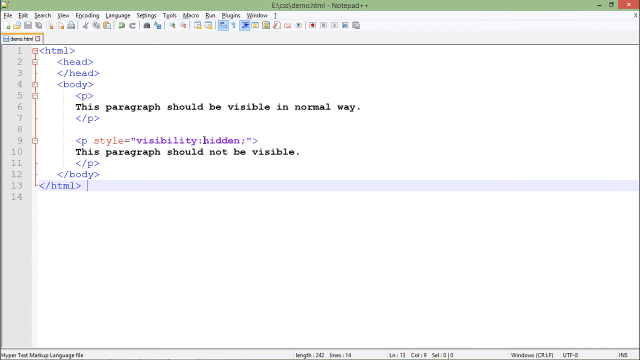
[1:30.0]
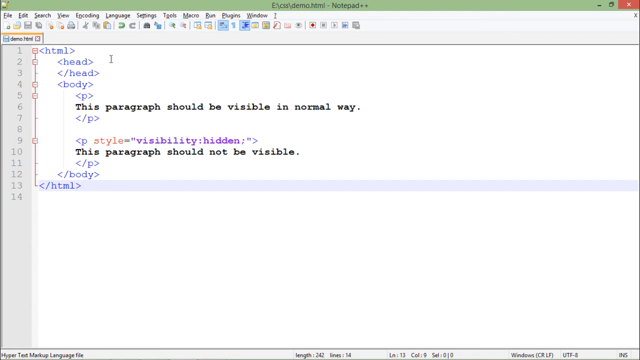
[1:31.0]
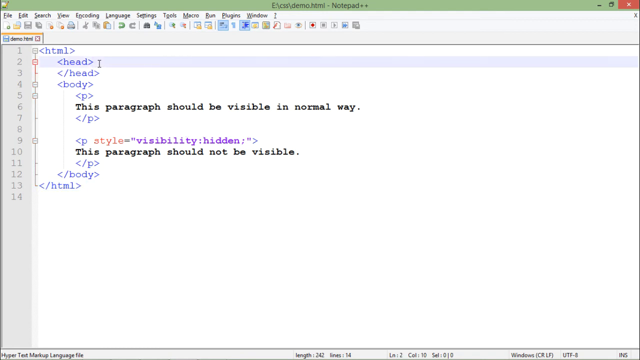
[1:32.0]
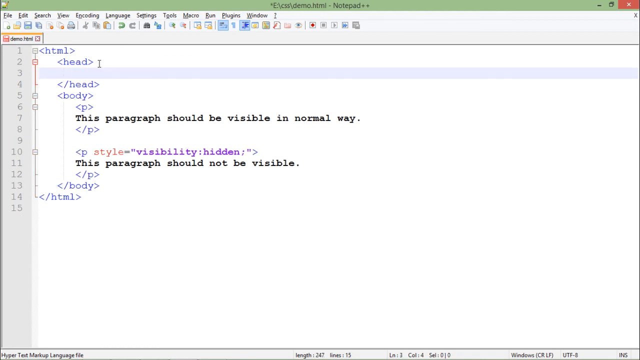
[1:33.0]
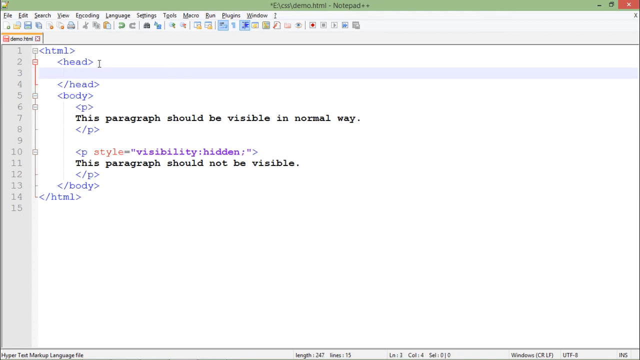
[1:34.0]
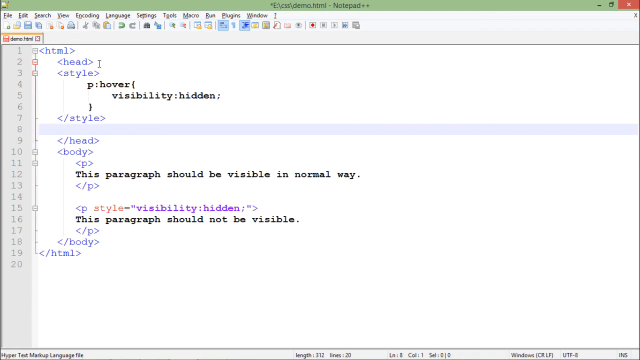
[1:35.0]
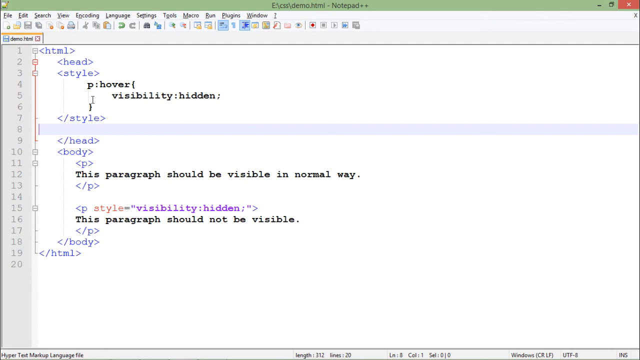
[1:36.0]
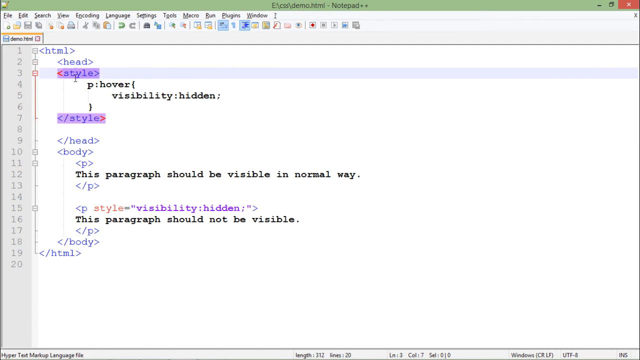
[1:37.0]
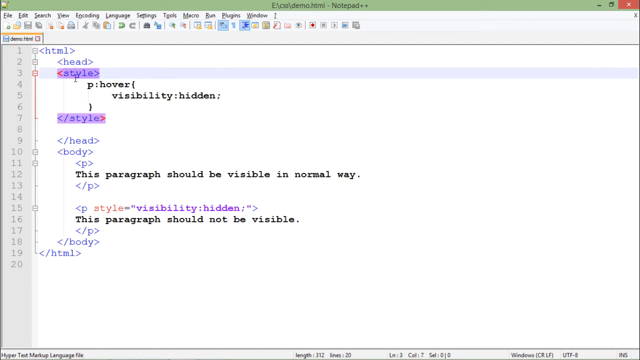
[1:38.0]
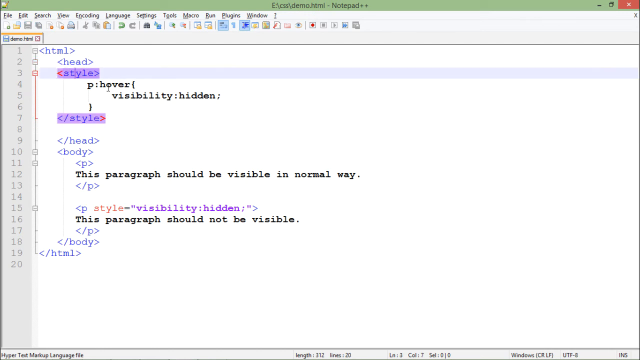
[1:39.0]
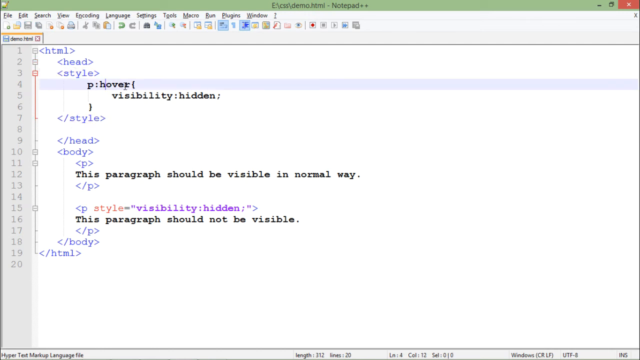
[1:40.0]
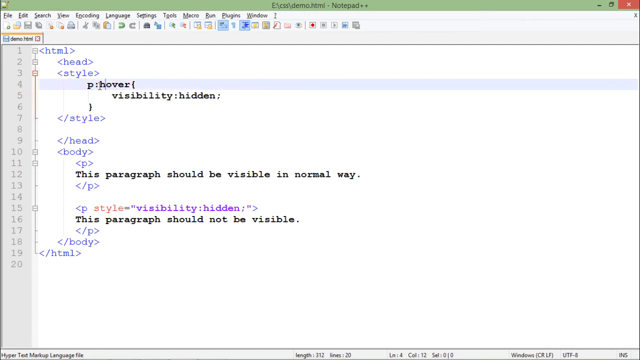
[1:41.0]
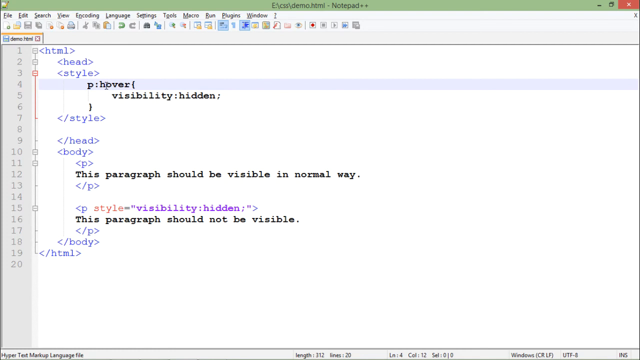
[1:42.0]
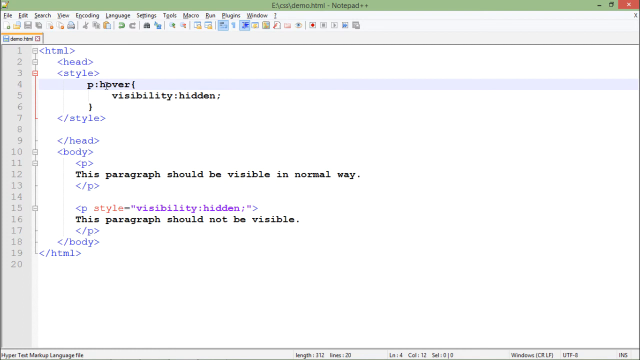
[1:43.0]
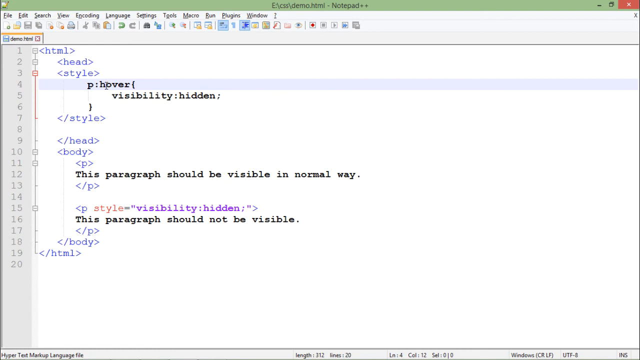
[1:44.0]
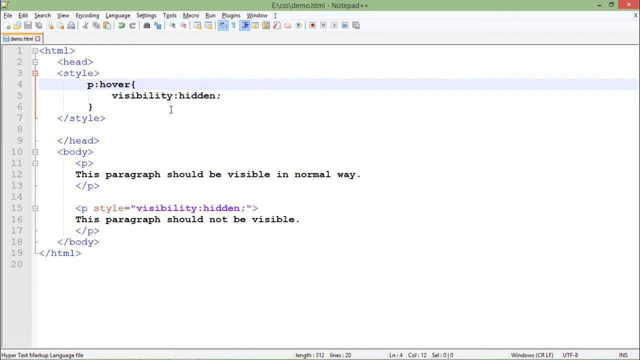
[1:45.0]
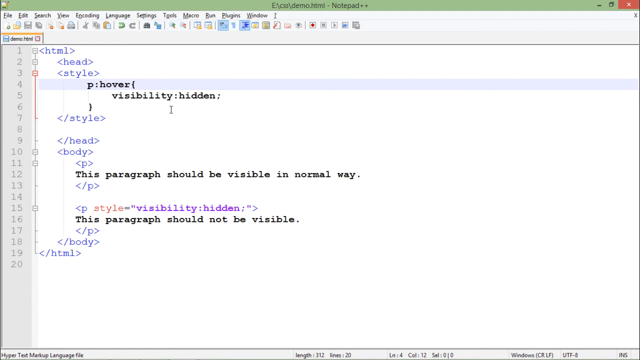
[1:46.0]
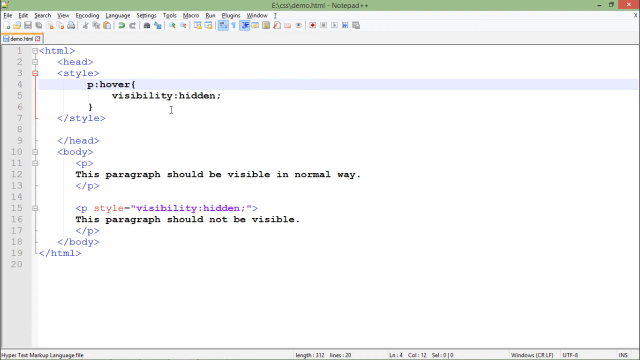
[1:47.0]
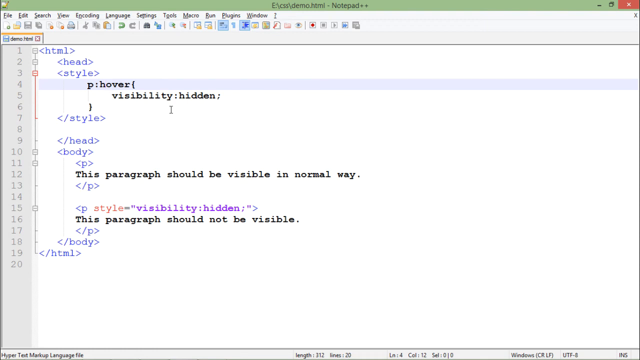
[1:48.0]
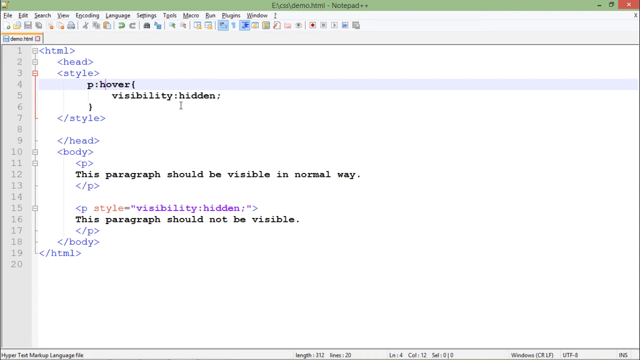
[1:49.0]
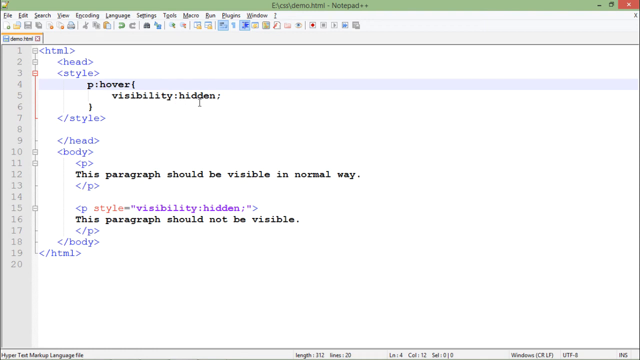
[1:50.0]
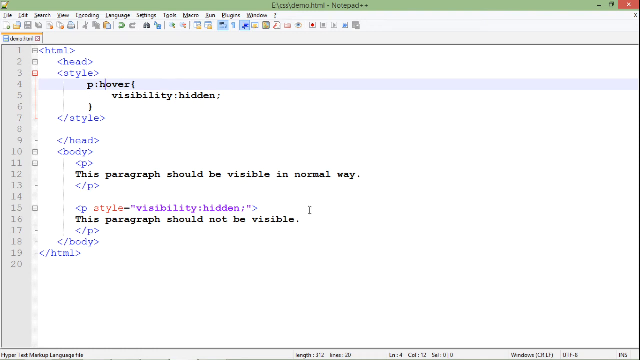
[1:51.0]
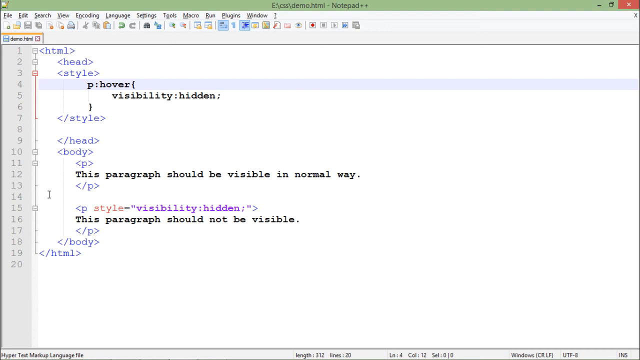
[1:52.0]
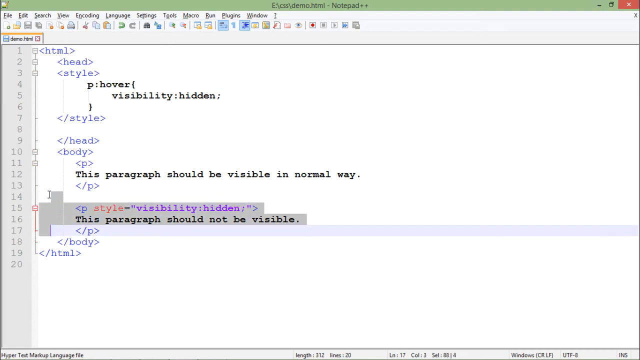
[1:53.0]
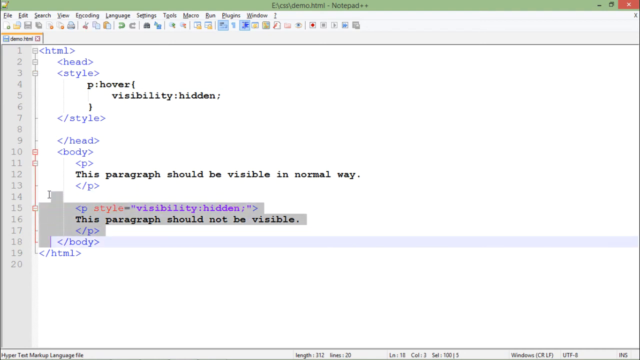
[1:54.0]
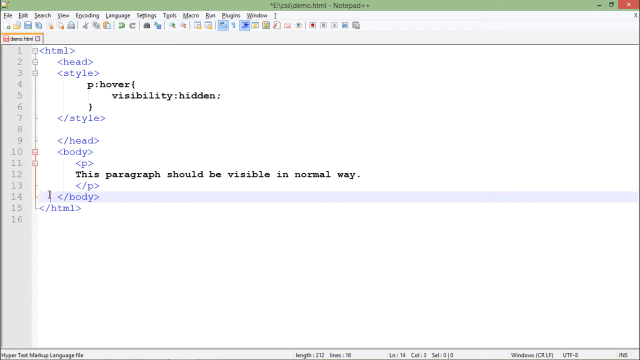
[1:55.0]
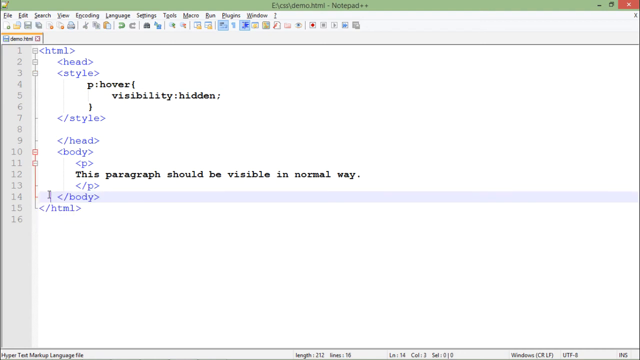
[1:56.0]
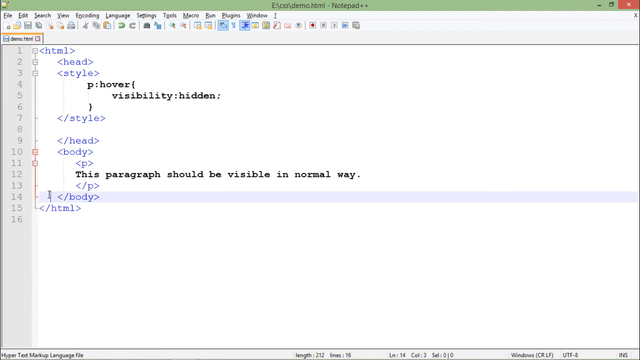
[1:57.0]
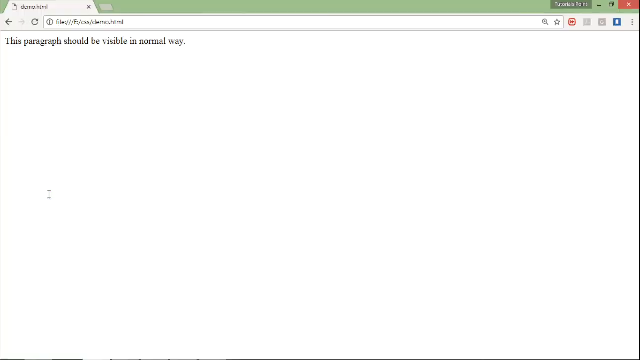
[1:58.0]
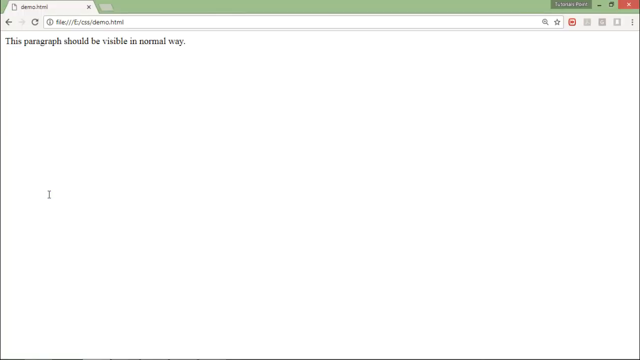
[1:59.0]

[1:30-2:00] The code editor shows a page of HTML and CSS code with HTML head, body, main HTML and paragraph tags; no people appear. A style tag is added to the HTML page, specifying paragraph hover with visibility hidden, which should hide the paragraphs when hovering over them on the webpage. The paragraph style tag at the bottom is also changed to show that the paragraph should be hidden on hover.